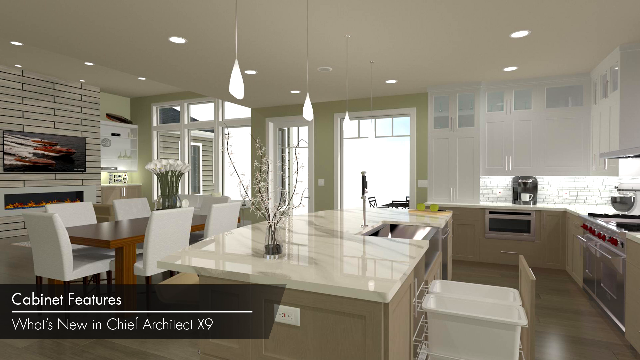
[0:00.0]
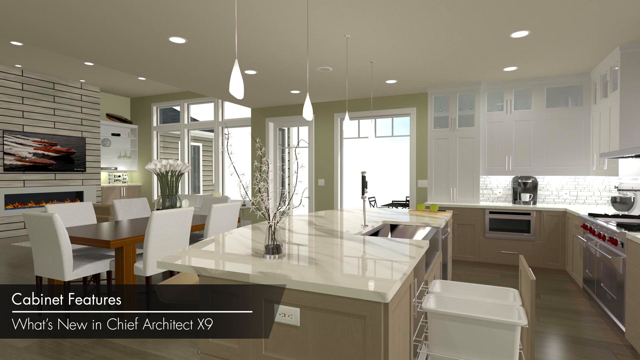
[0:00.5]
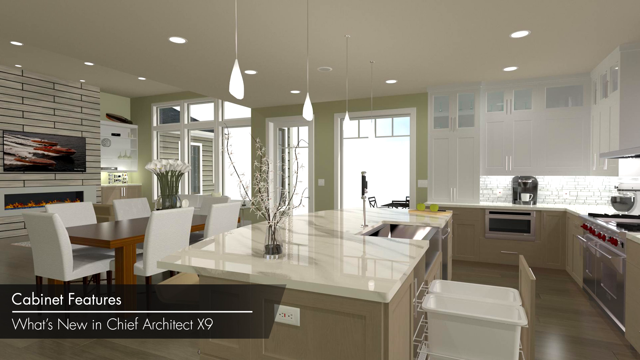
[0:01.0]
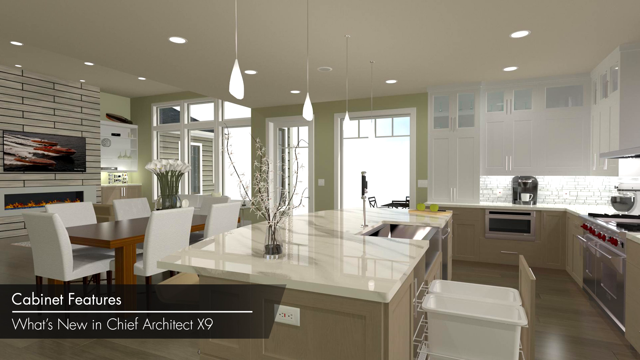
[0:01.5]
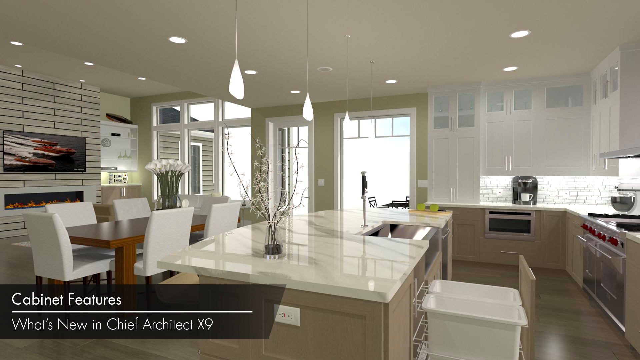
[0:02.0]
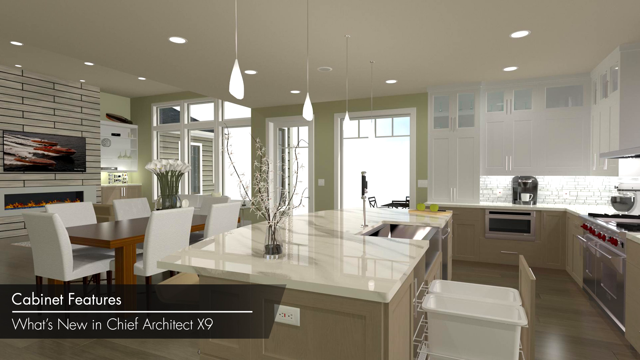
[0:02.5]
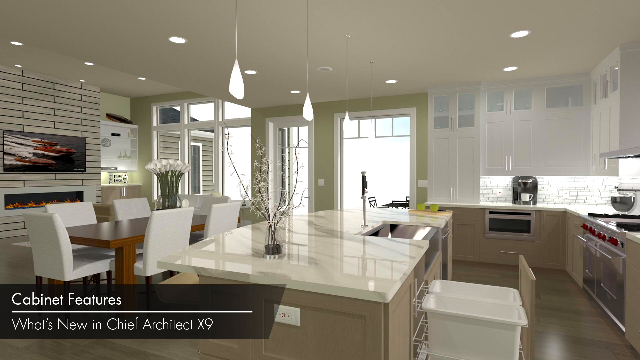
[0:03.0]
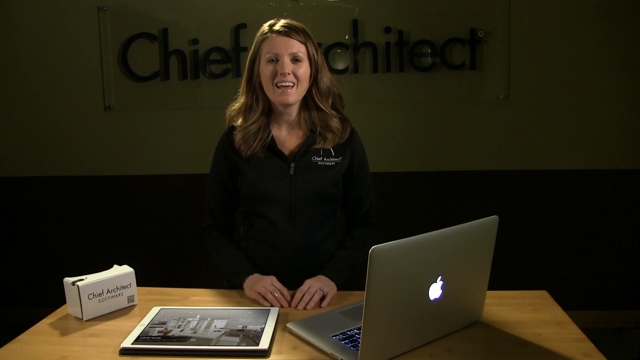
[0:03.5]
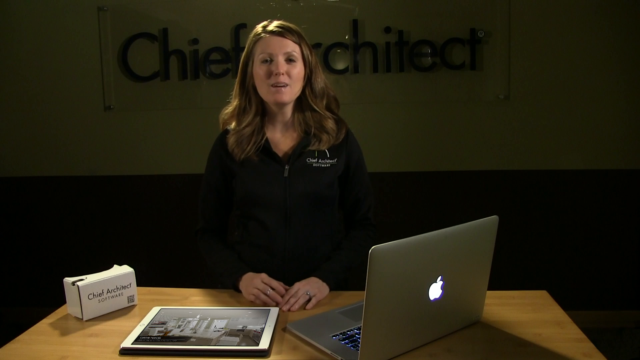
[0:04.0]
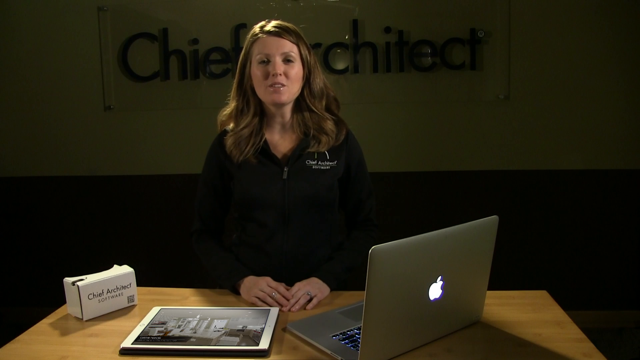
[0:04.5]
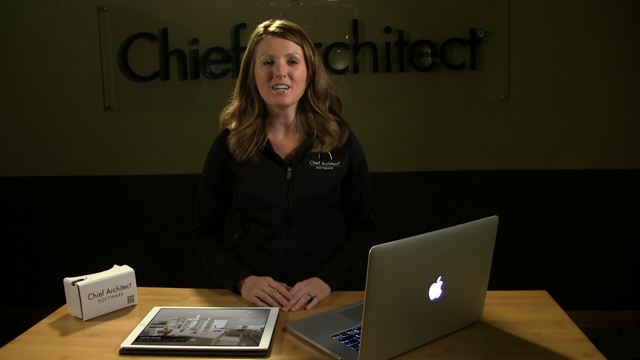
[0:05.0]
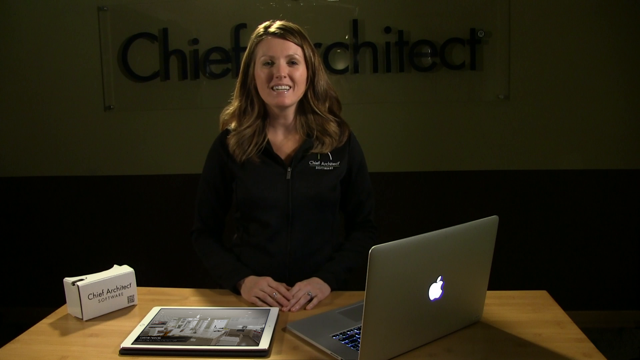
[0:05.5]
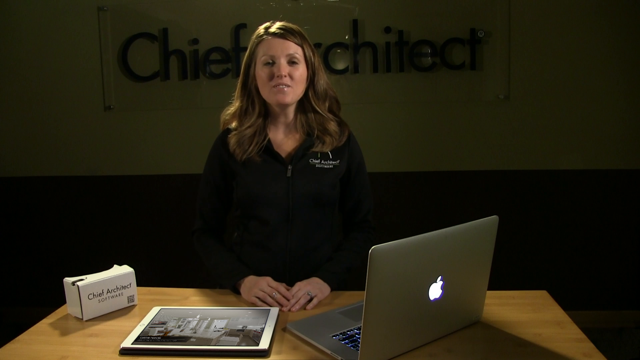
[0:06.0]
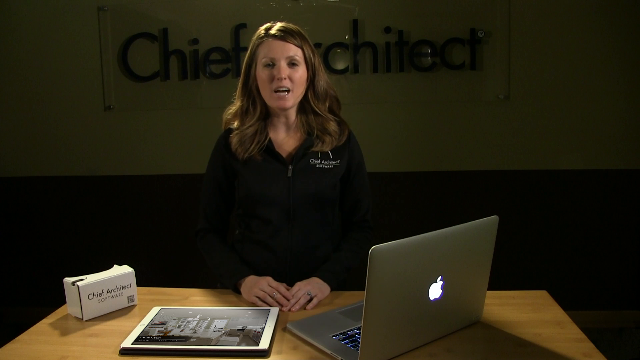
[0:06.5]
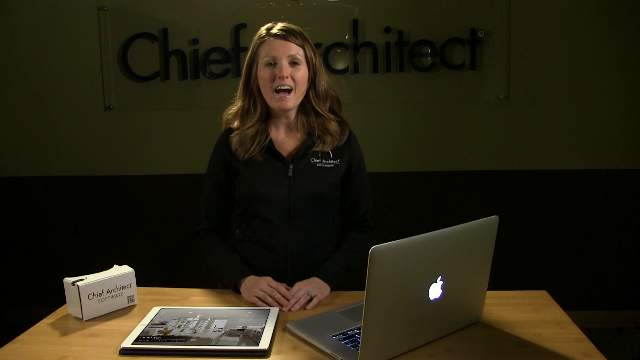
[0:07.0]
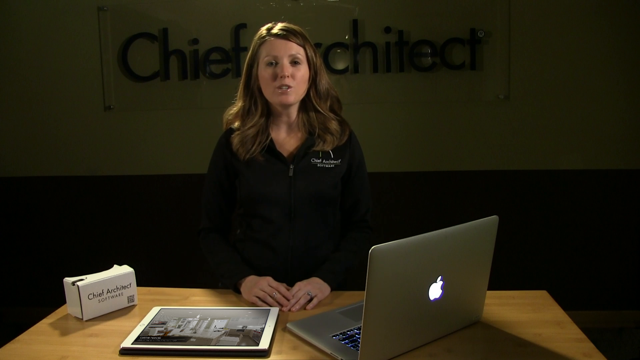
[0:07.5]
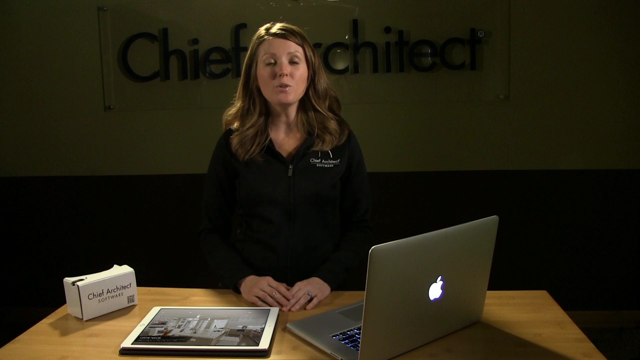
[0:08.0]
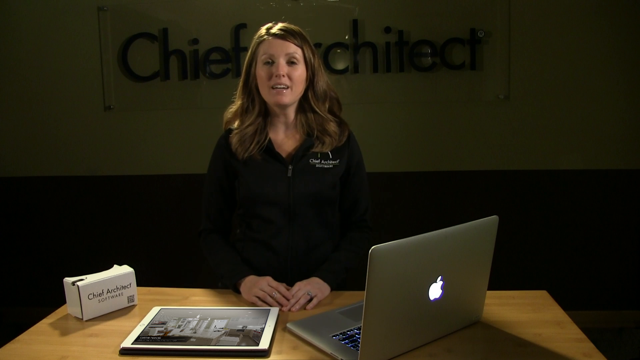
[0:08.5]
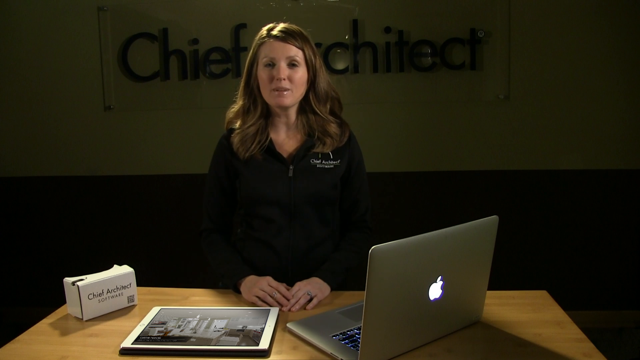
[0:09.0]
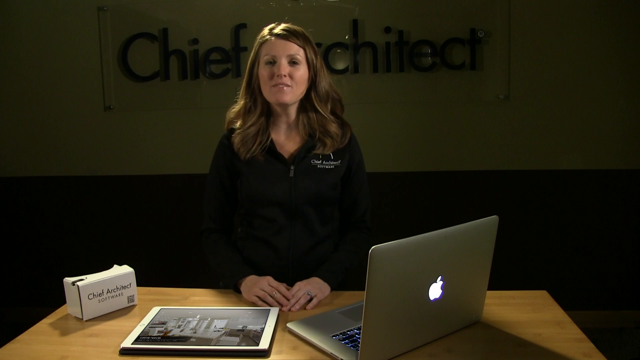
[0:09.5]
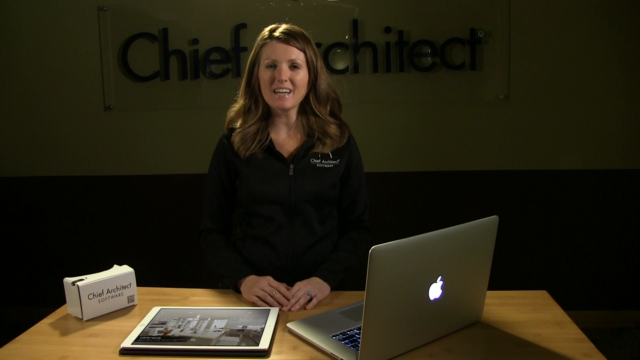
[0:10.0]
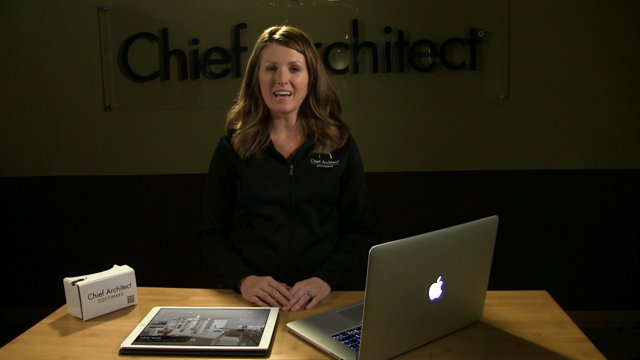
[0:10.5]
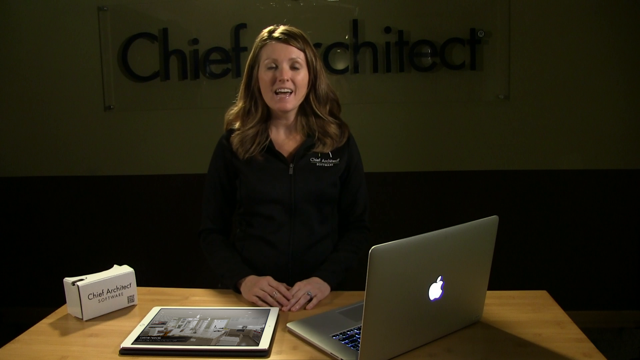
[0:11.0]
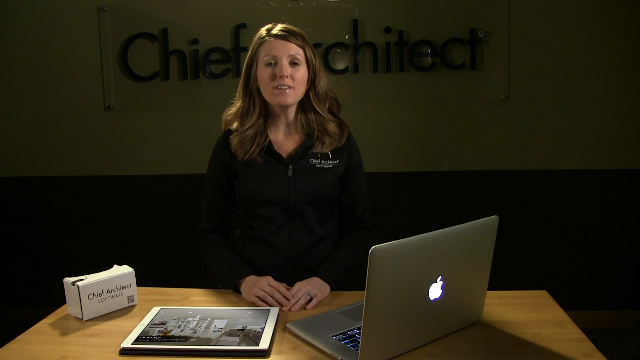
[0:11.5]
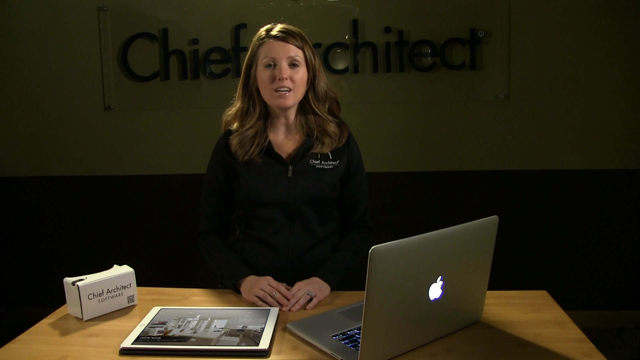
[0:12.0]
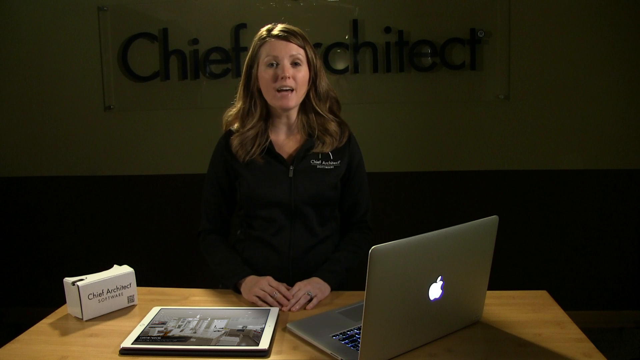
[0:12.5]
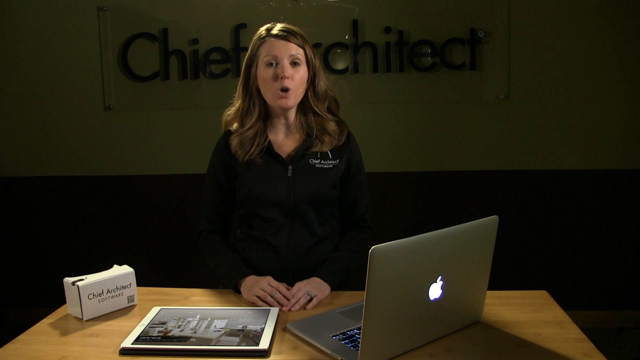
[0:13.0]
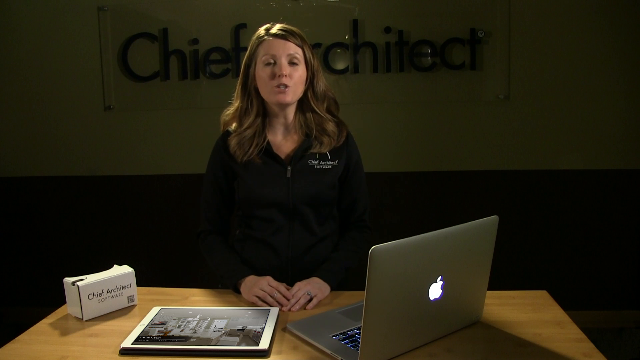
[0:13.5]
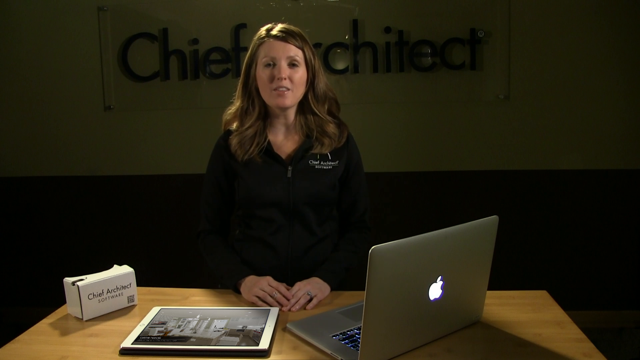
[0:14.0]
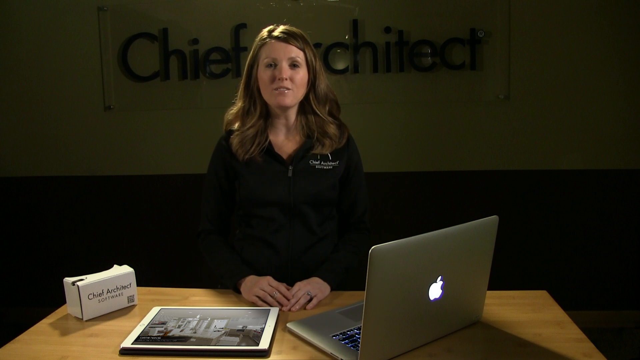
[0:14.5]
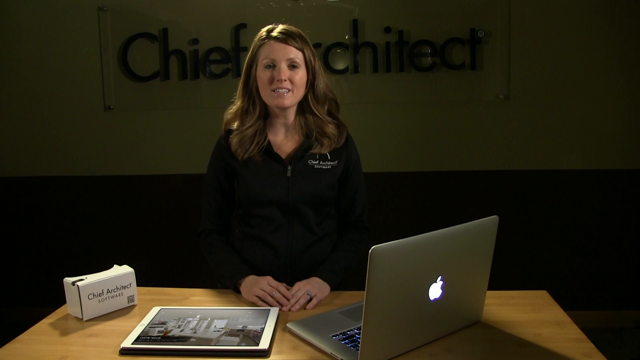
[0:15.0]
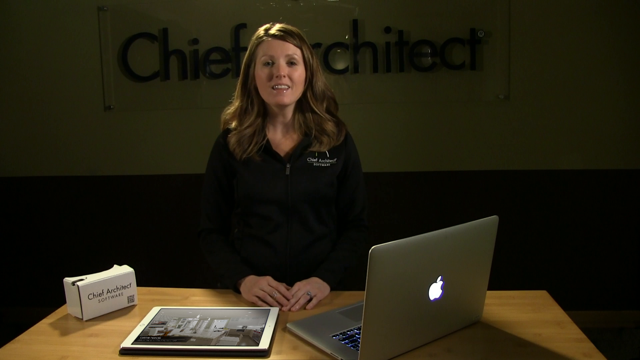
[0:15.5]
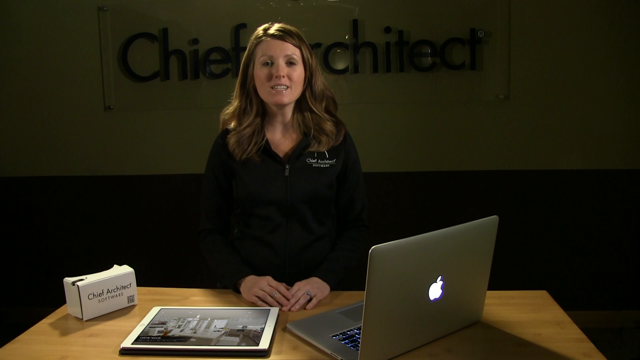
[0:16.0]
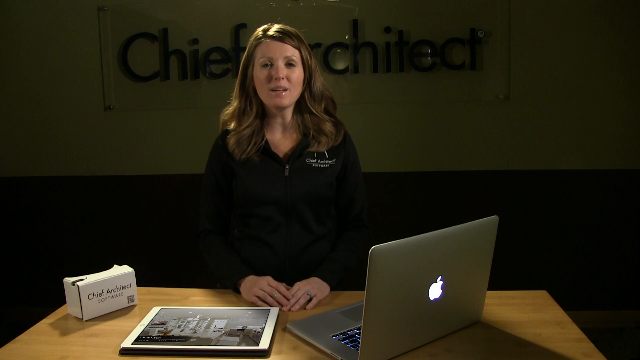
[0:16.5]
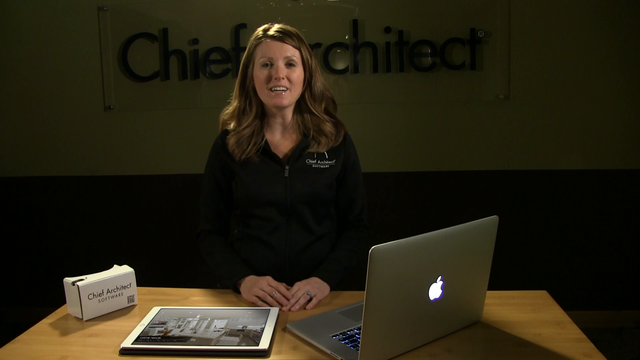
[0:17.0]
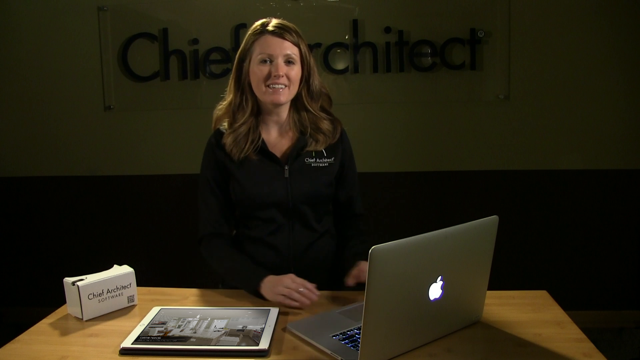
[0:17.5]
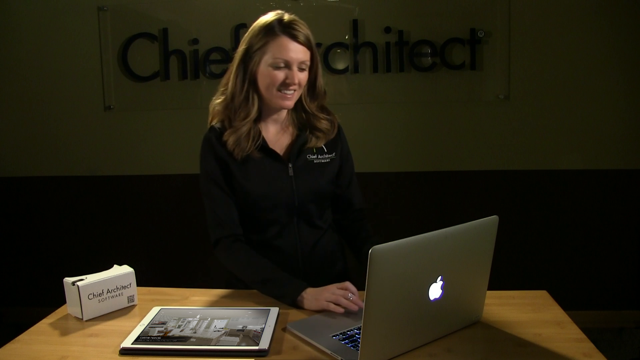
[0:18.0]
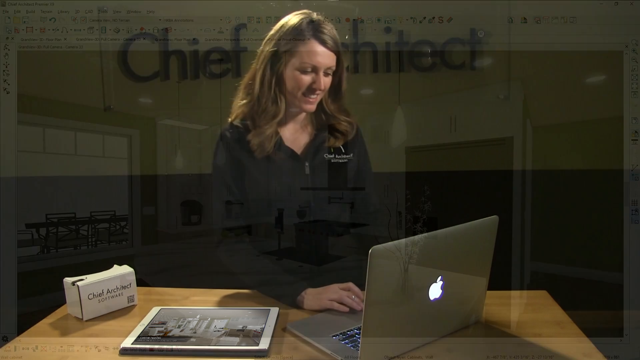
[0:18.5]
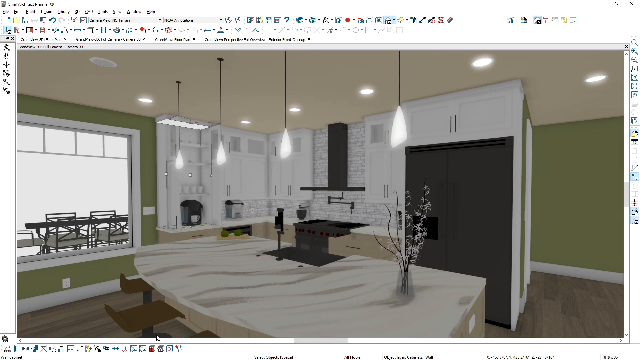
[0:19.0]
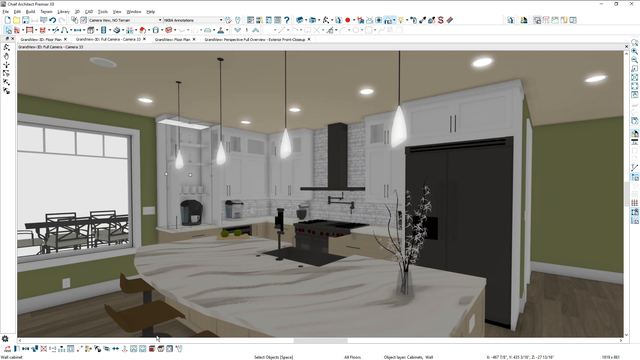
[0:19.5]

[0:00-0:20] A woman in a black shirt, with two rings on her finger, has an Apple laptop in front of her. She shows some designs and cabinet features, presenting what's new in Chief Architect X9, and she looks happy to talk about what she has been designing and its features. Her room is a little dark, cream on top with a dark layer at the bottom. On a wooden table there is a picture of a building and what appears to be a box of business cards. She is the only person in the room. The video then changes to a mostly white modern kitchen with all new appliances; on top of the counters there is a coffee maker and a mixer.